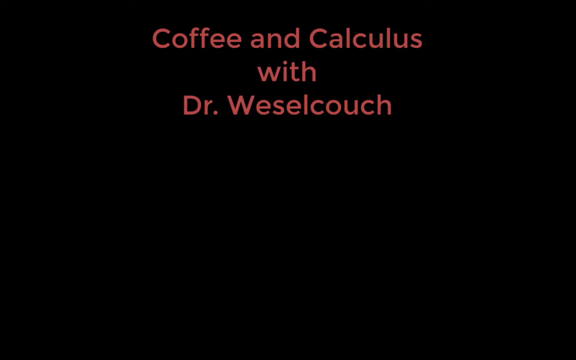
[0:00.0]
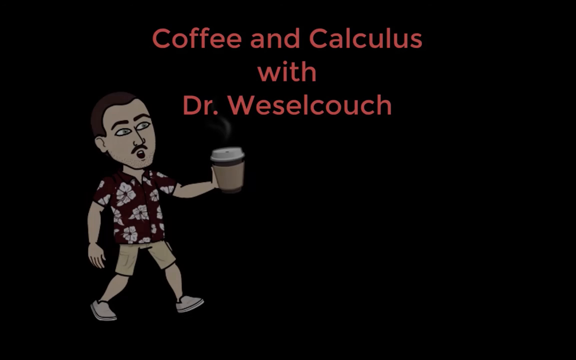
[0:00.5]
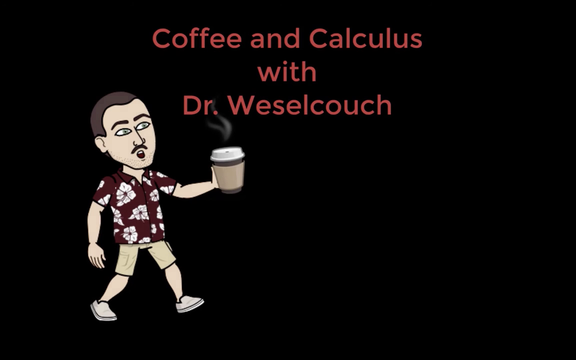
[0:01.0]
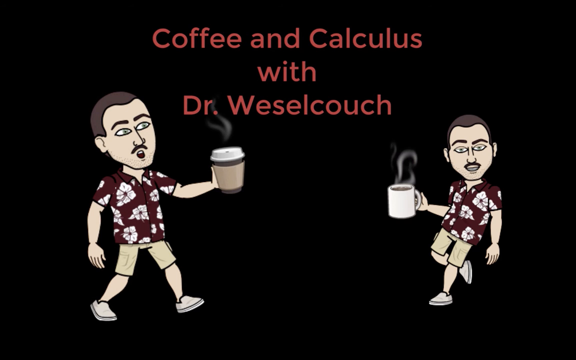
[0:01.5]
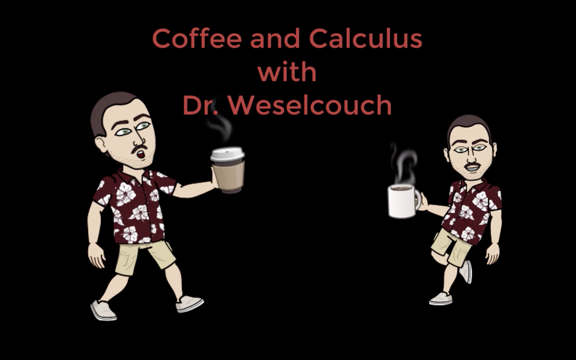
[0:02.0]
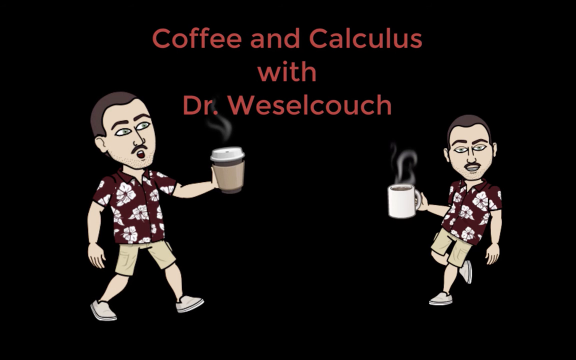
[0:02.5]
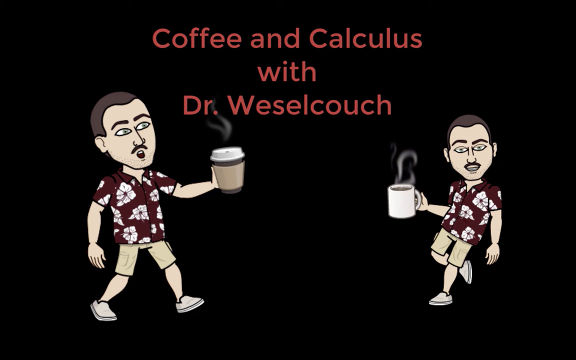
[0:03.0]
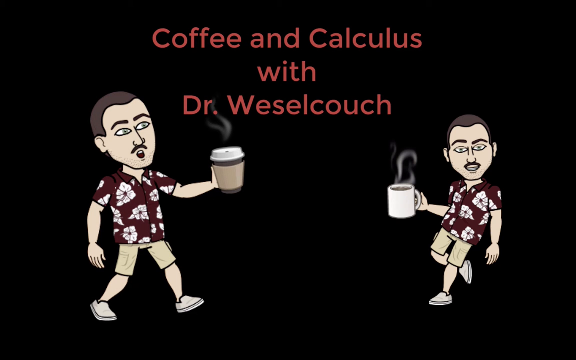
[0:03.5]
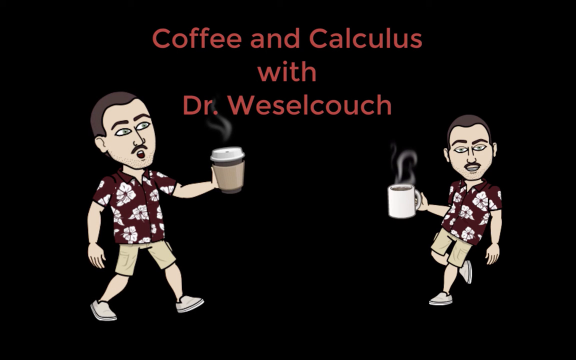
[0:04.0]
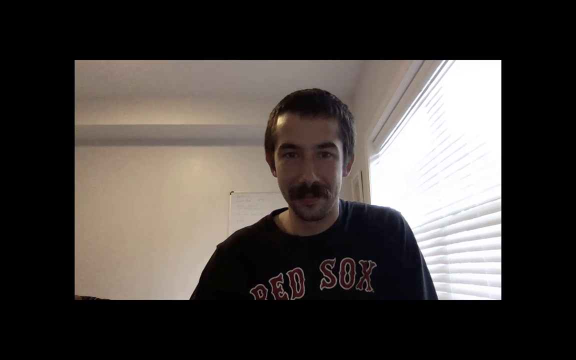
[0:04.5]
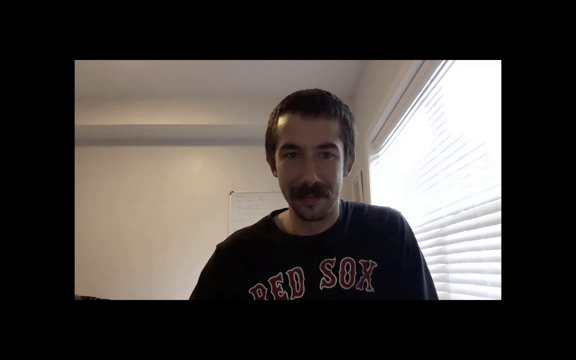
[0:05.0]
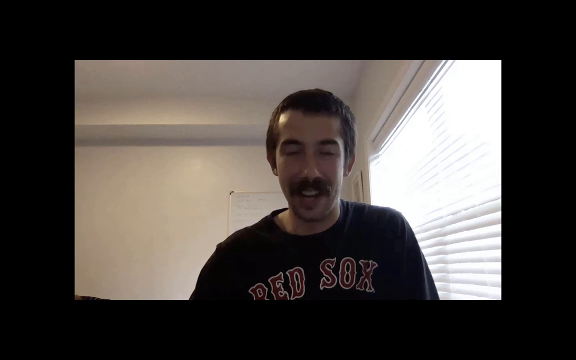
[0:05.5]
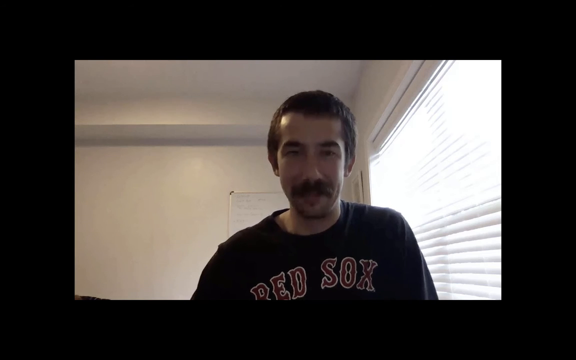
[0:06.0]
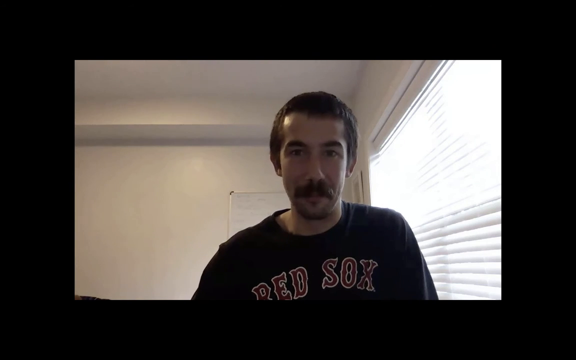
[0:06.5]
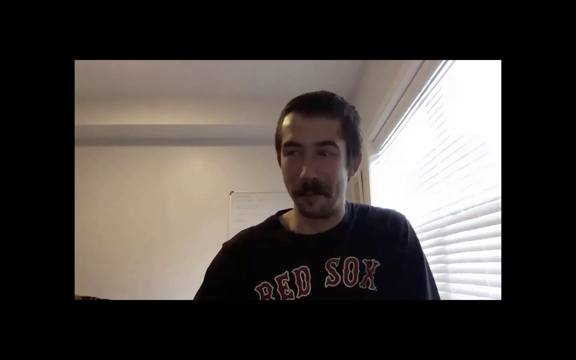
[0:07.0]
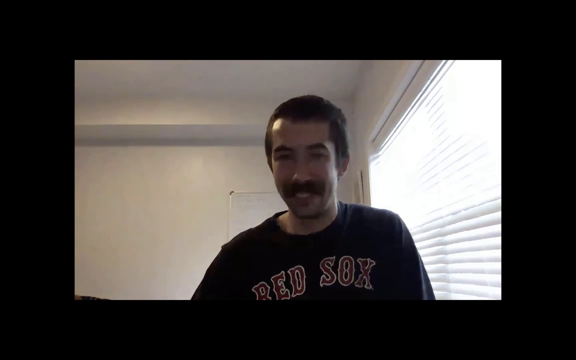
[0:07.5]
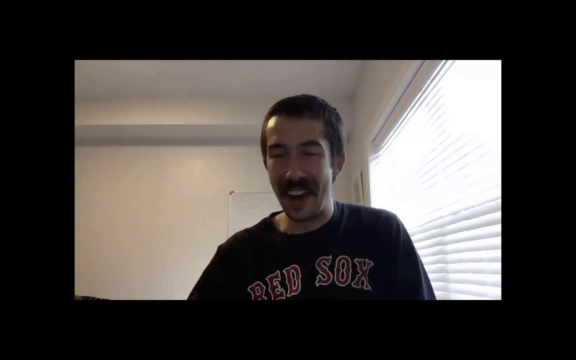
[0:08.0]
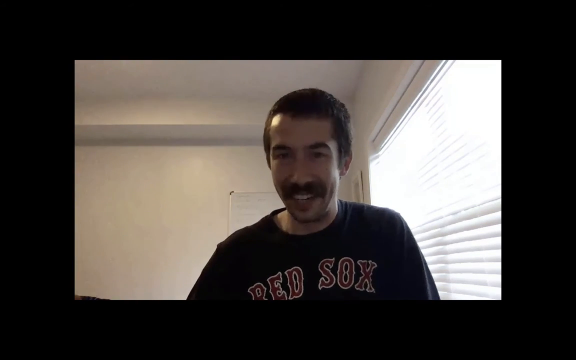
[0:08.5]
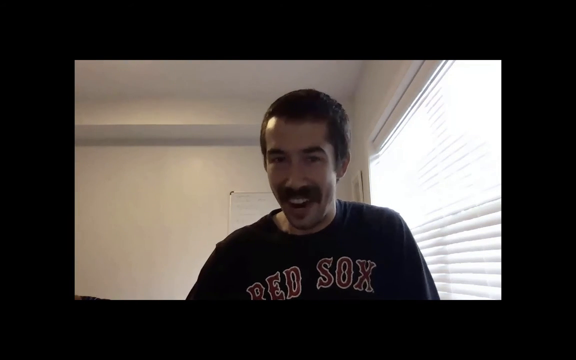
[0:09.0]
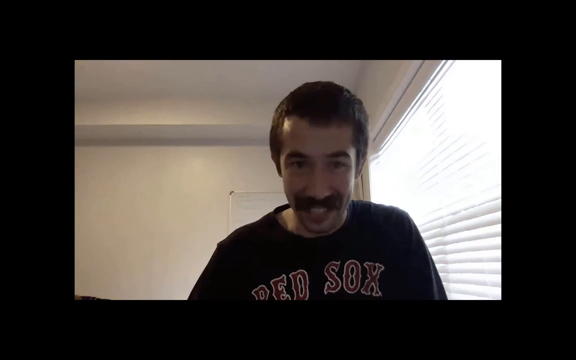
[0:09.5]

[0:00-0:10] The video opens with the title "Coffee and Calculus with Dr. Wessel Couch." Below it are two characters, both the same man doing different things. The character on the left wears a Hawaiian shirt and carries a coffee cup; the other is the same man in the same Hawaiian shirt, but holding a coffee mug instead. The video then moves on to show the man who is probably going to teach calculus, Dr. Wessel Couch.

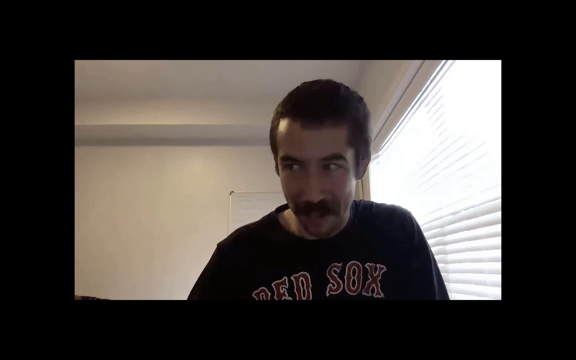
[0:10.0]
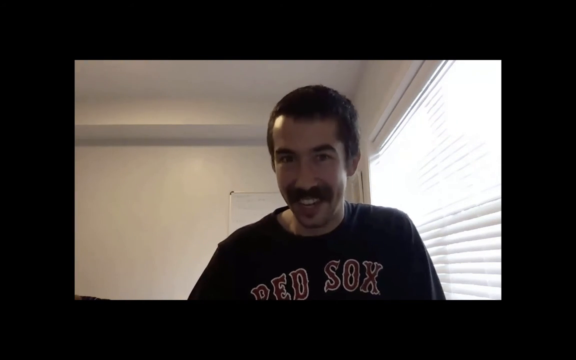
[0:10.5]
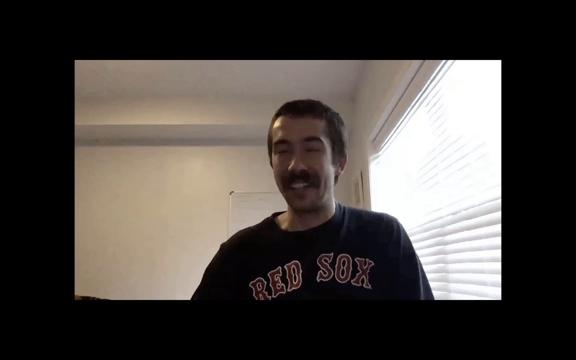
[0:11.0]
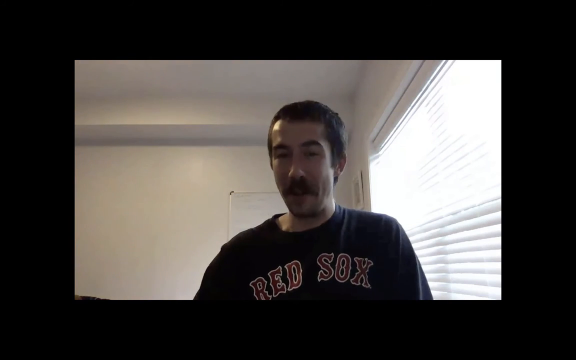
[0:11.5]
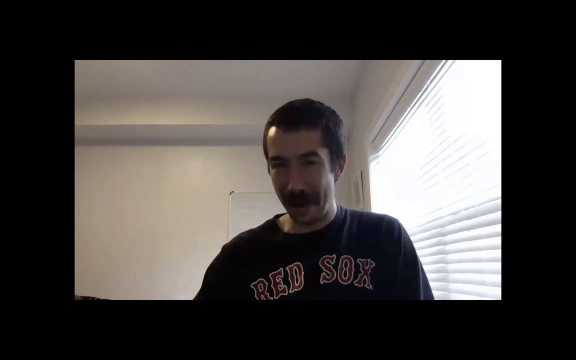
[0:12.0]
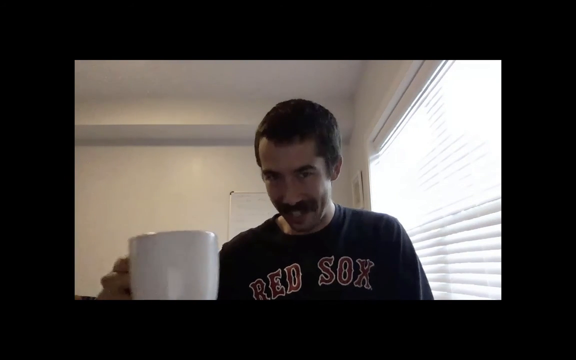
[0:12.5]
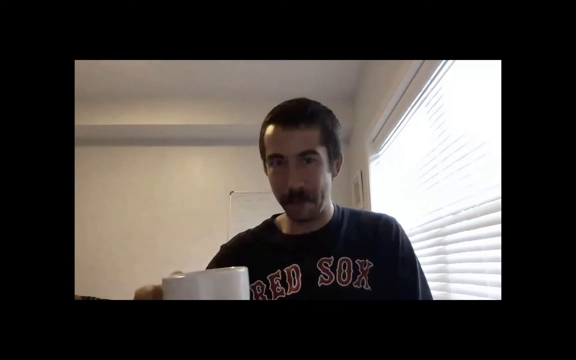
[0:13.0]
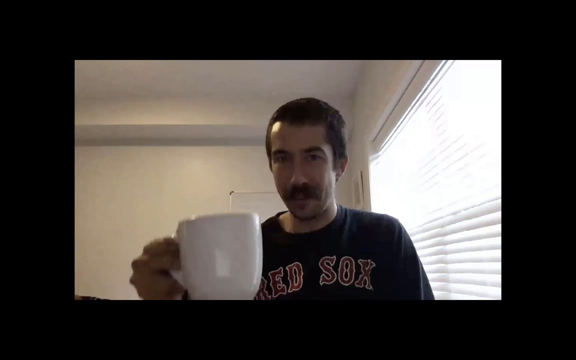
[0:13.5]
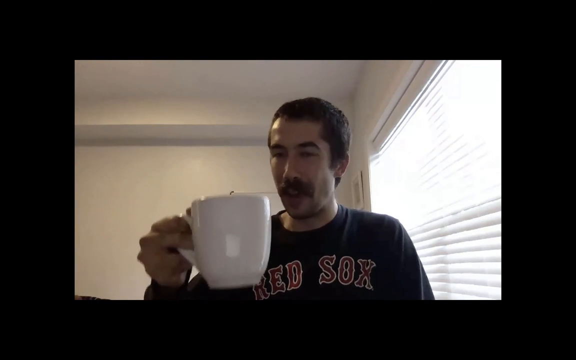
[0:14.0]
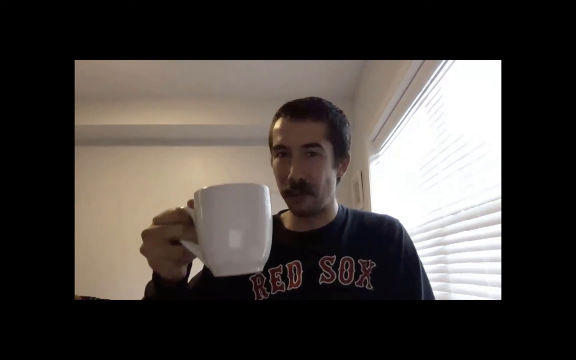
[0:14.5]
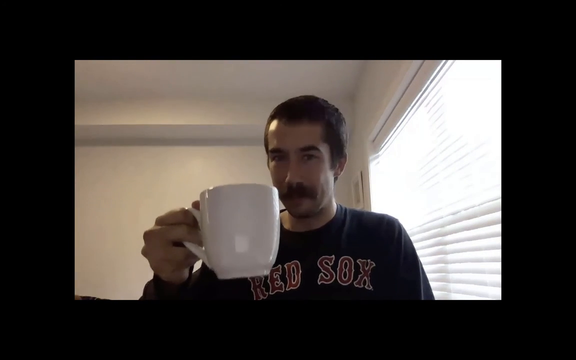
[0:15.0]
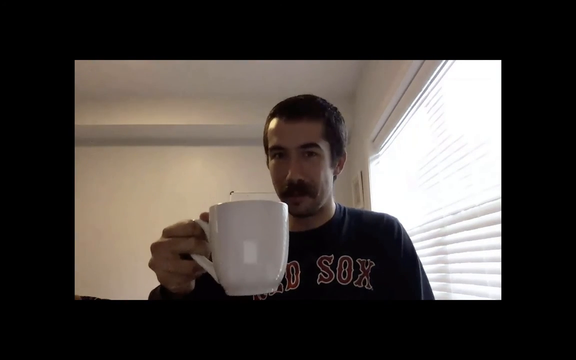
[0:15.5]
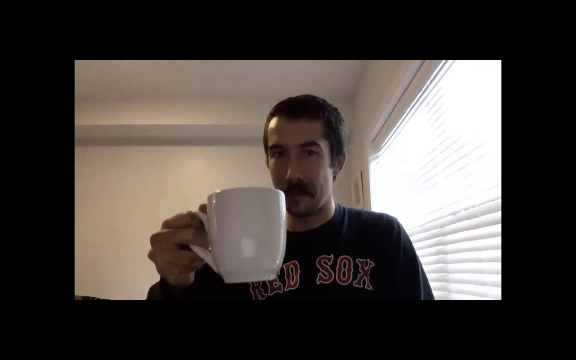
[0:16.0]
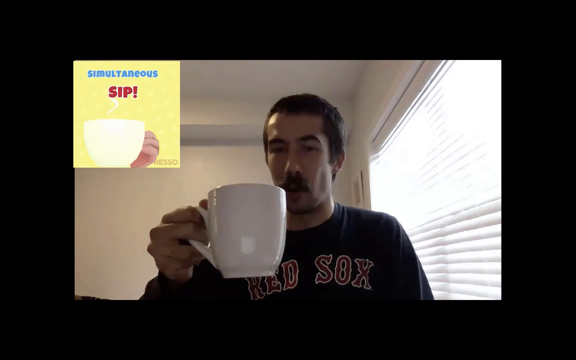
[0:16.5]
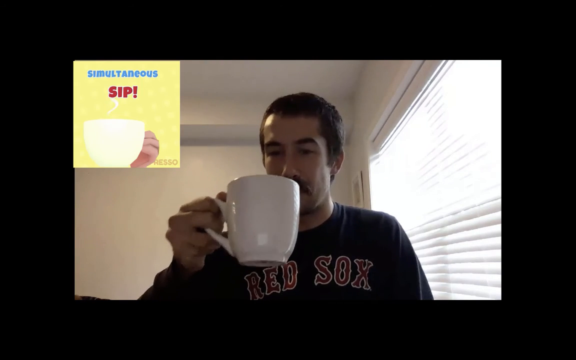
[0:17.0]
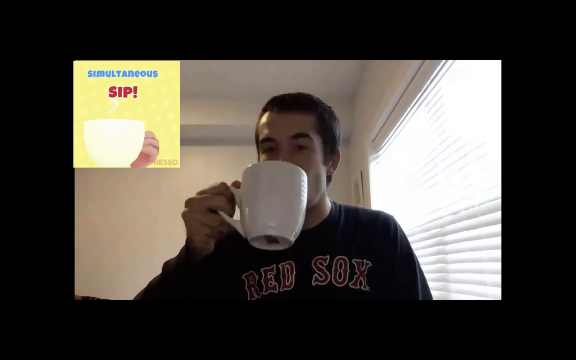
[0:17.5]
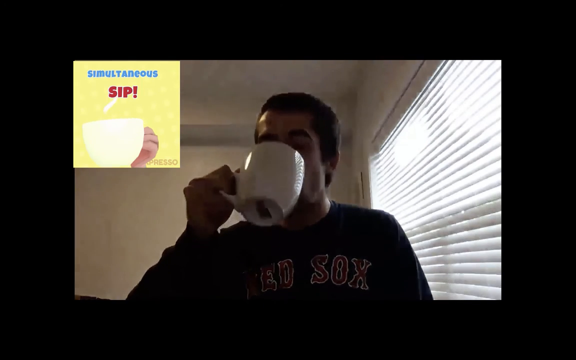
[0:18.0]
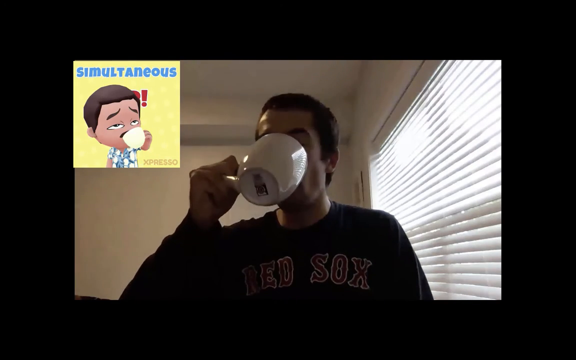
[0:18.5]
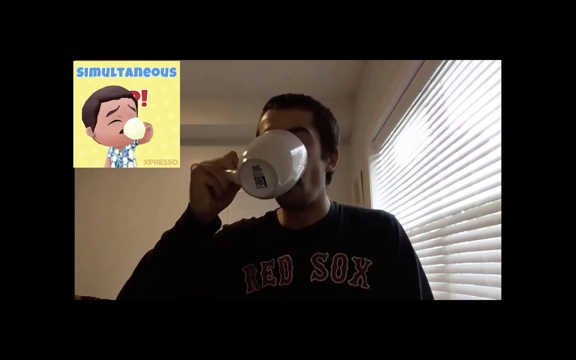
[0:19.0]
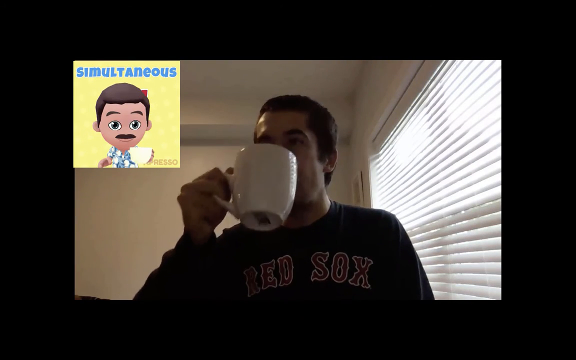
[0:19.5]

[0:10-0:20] Dr. Whistlecouch talks to the viewer, then holds up a mug to show that he is drinking coffee. He appears to be in a very plain white room with almost nothing in the background. He wears a Red Sox shirt. In the upper left corner, text reads "simultaneous sip," suggesting he is probably drinking the coffee while talking about calculus.